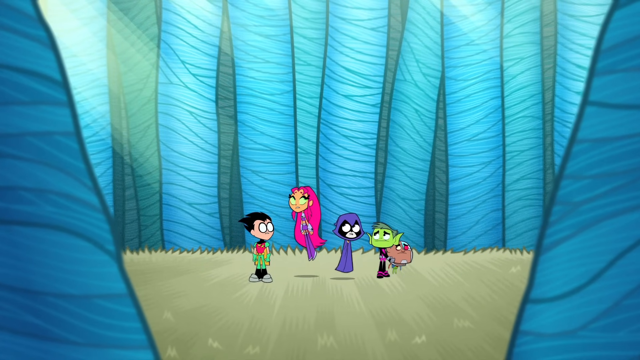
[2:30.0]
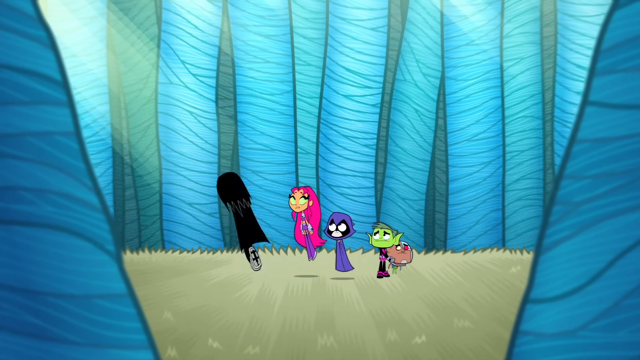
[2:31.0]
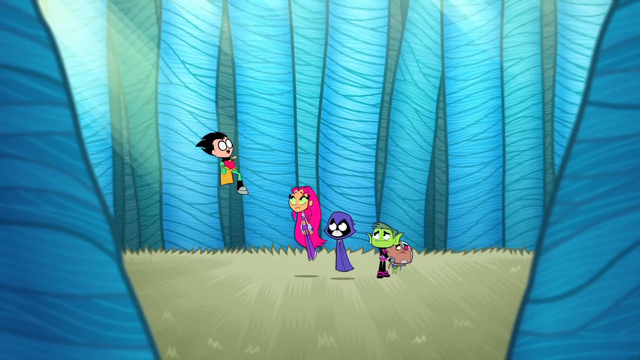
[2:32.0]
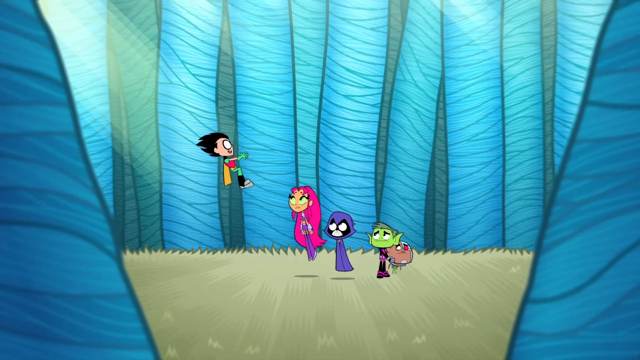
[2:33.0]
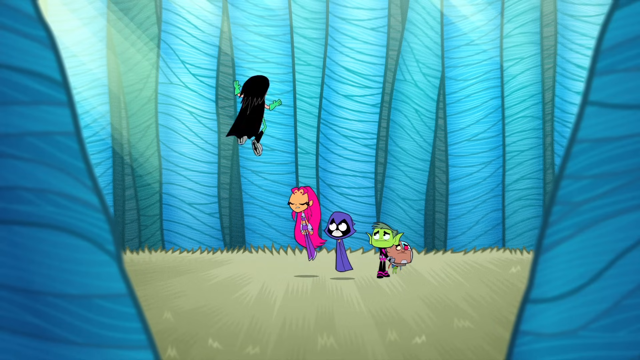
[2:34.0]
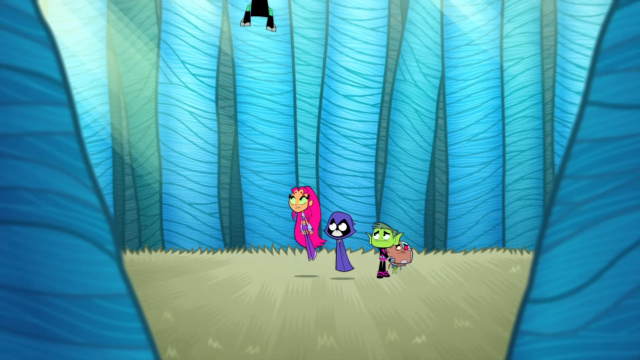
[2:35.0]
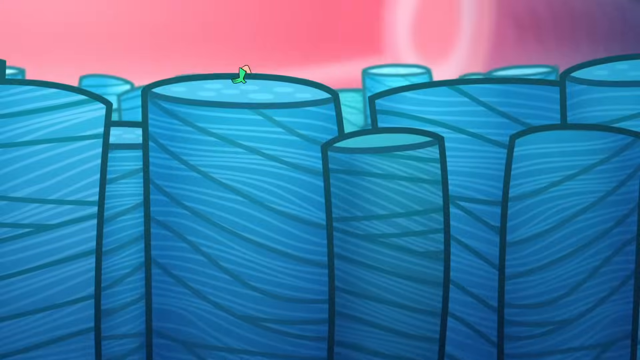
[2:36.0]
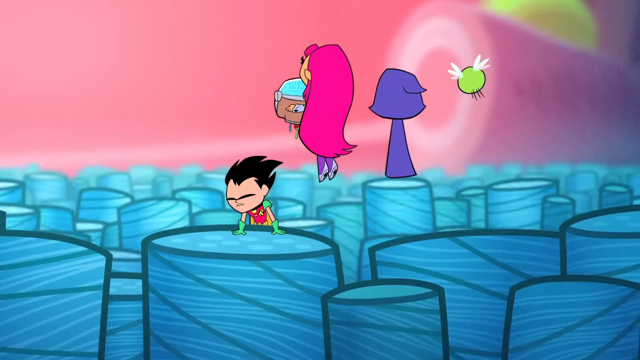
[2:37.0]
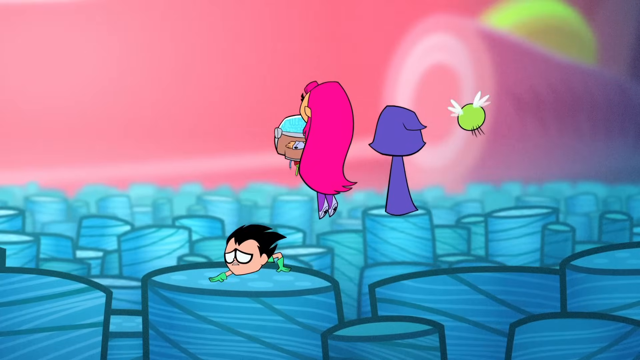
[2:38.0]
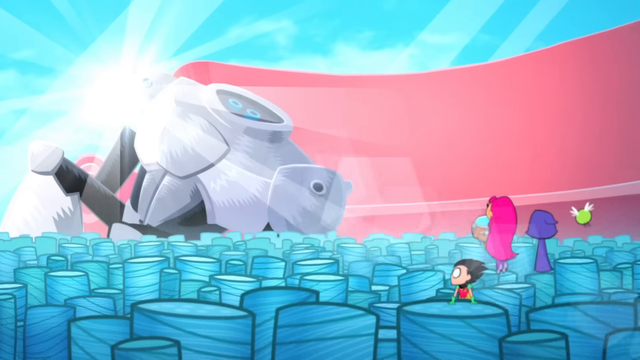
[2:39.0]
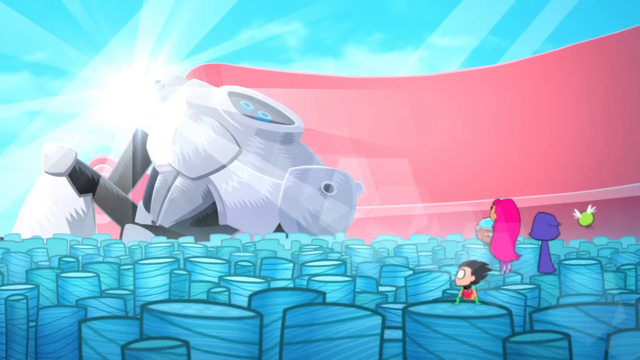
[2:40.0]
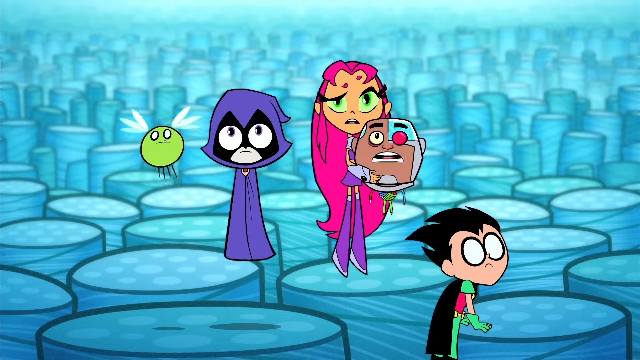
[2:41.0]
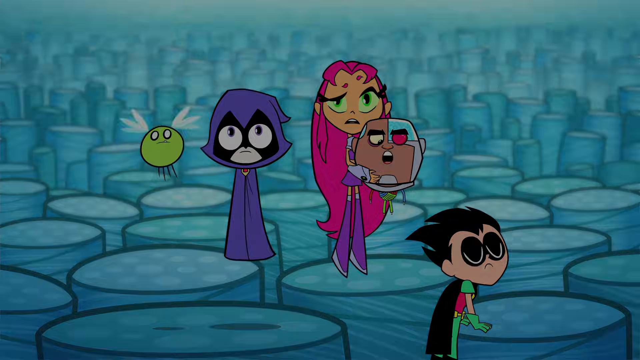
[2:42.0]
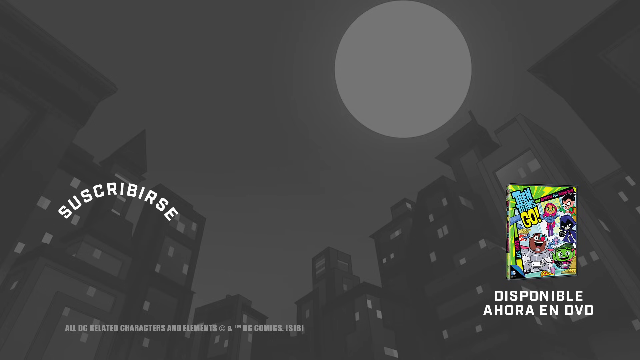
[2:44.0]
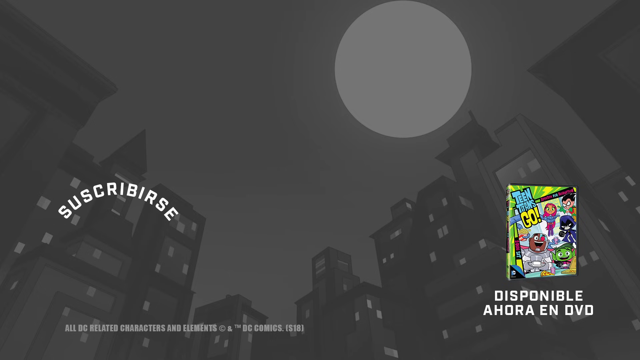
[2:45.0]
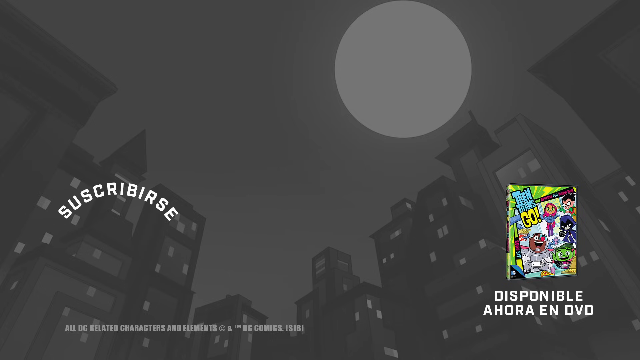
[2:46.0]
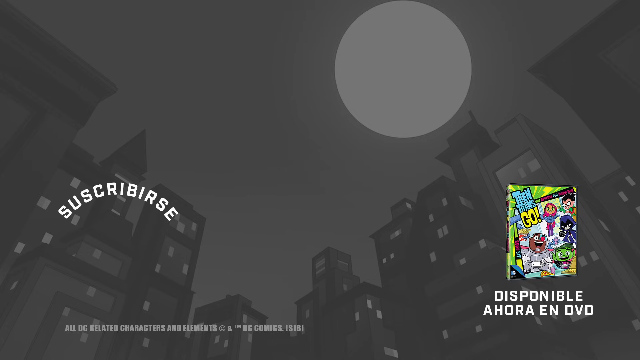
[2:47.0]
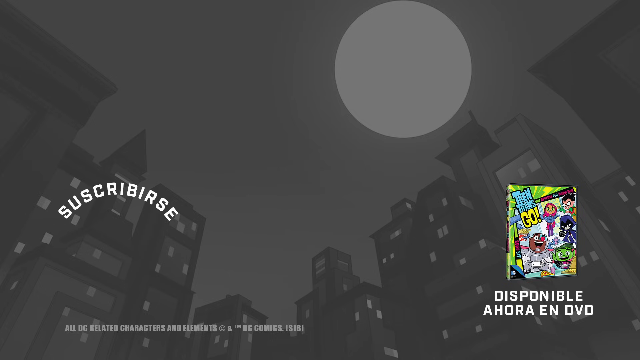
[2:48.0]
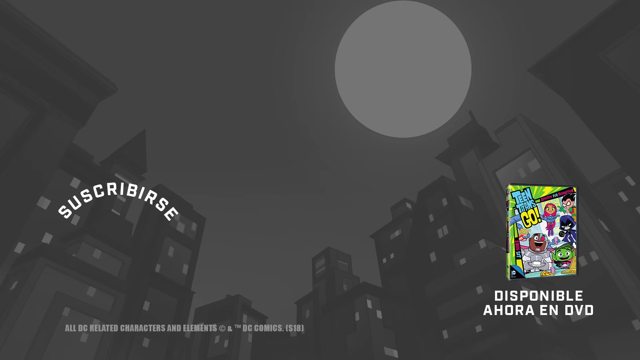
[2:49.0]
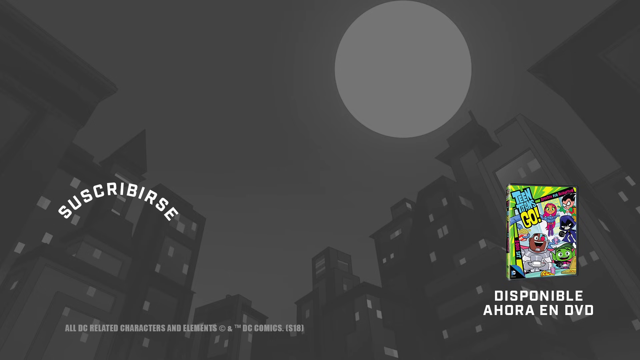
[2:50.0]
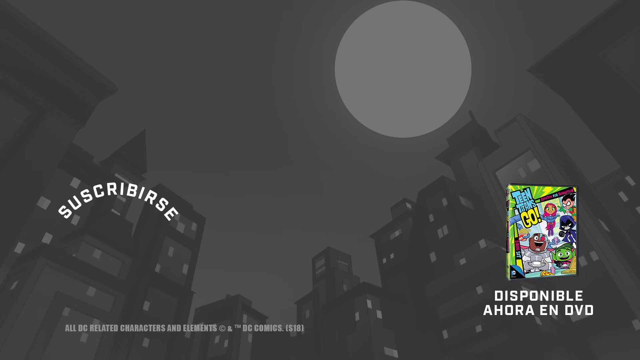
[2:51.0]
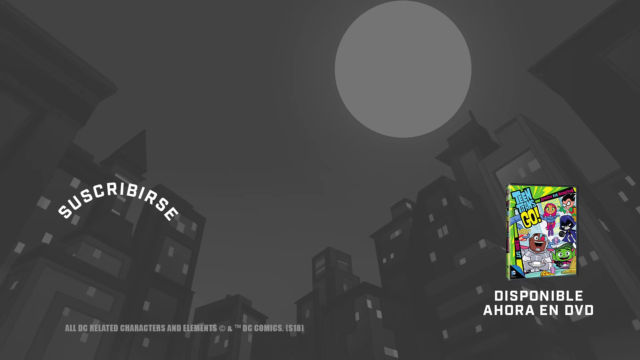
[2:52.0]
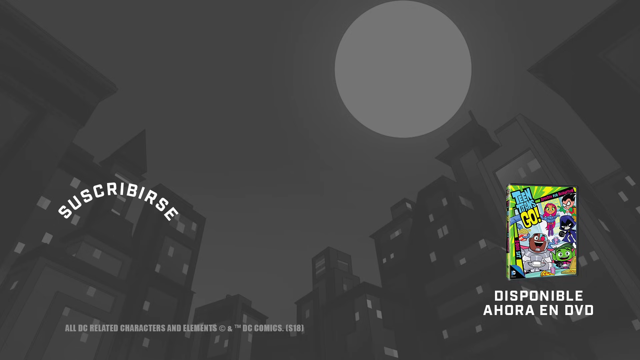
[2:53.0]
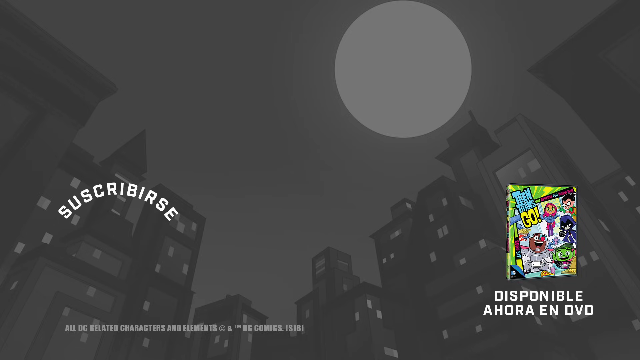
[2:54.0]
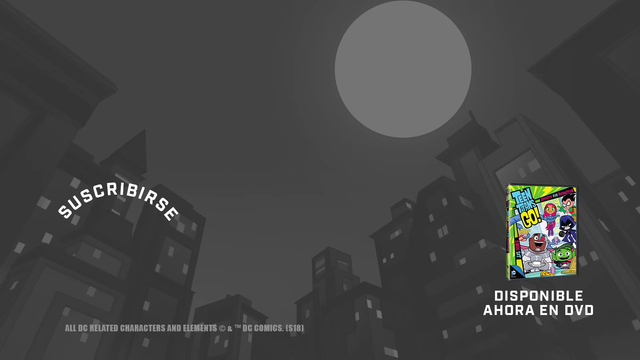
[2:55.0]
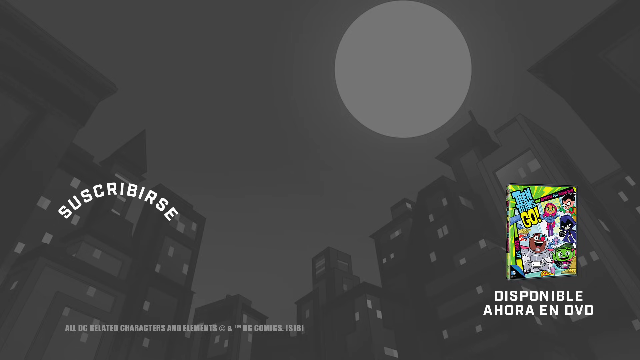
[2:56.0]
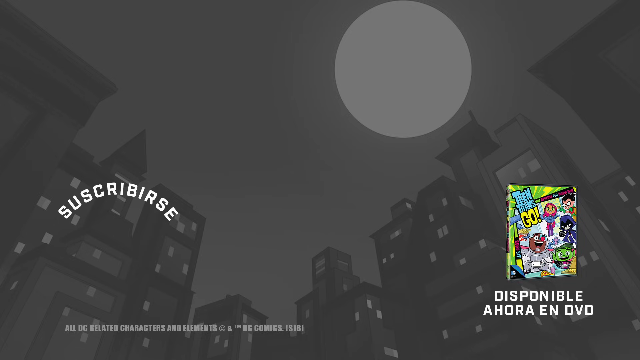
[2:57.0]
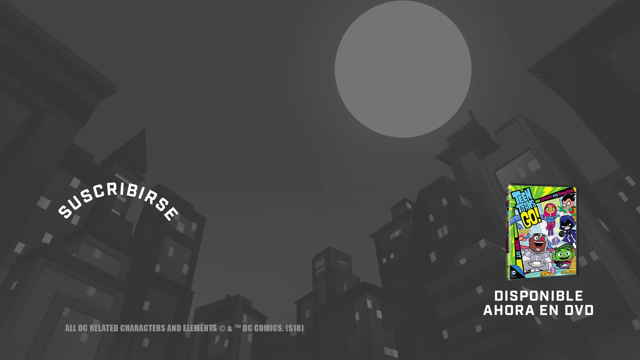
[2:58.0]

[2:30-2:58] Robin, Starfire, Raven and Beast Boy, who is holding on to Cyborg's head, have all been shrunk by the machine to be extremely small. They stand in the carpet, whose individual fibers are very tall, almost like trees towering above them. They climb on top of the carpet, stand atop it and look at something in the distance, which looks to be Cyborg's body. Next to it is almost like a very bright light, like a flashlight or maybe the sun; with the walls of their home a bright blue color, it almost looks as if the sun is rising over the shoulder of Cyborg's body, which is propped against the pink couch, sitting on the floor.